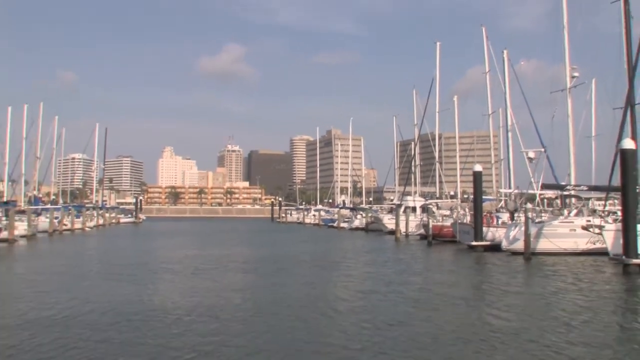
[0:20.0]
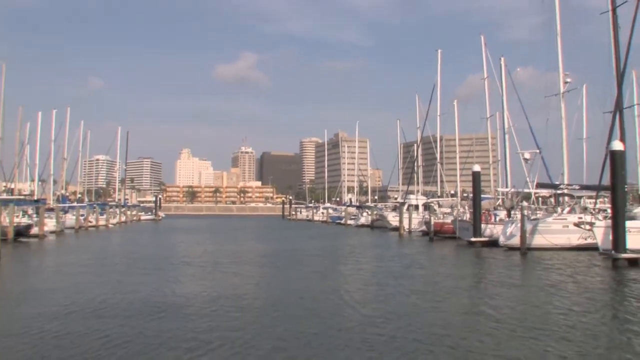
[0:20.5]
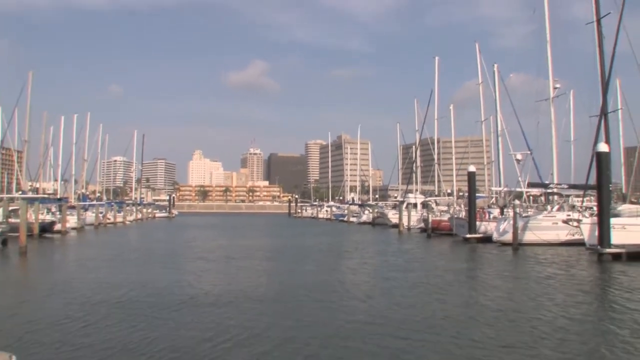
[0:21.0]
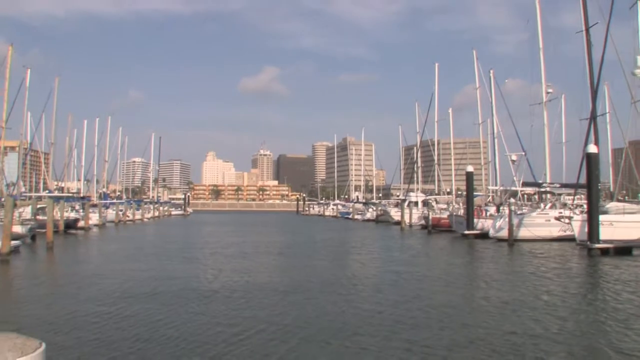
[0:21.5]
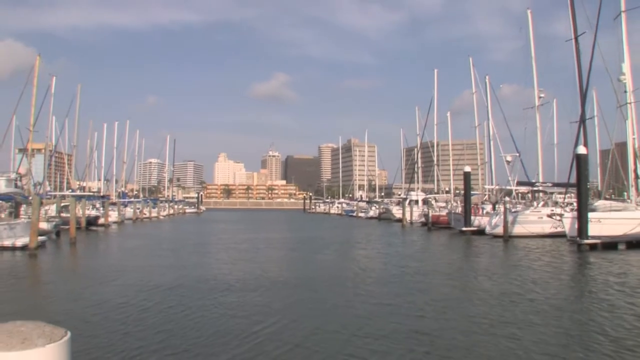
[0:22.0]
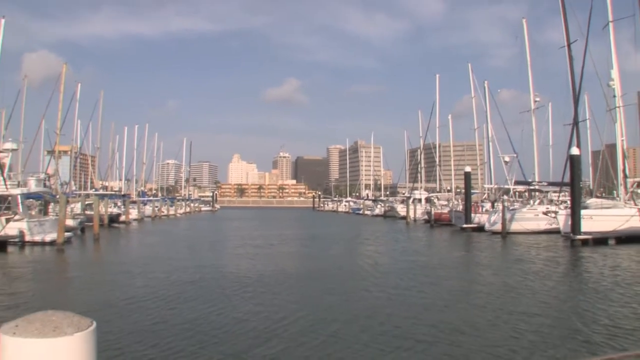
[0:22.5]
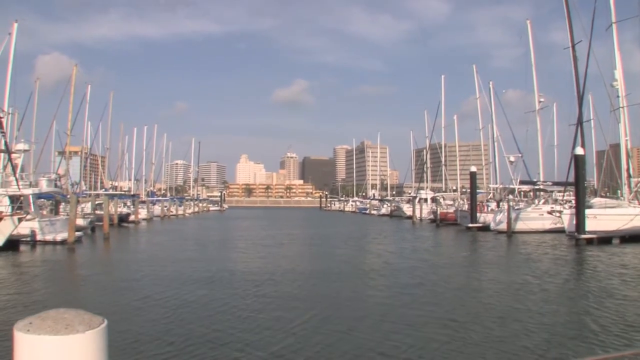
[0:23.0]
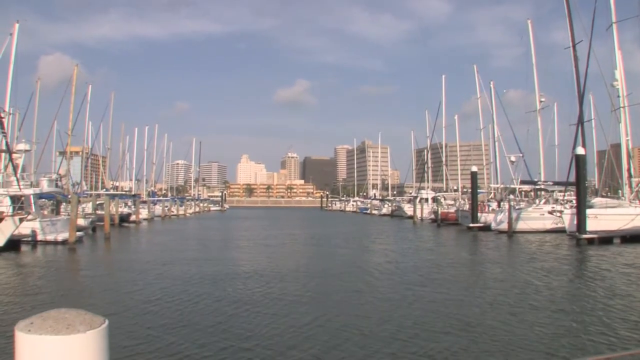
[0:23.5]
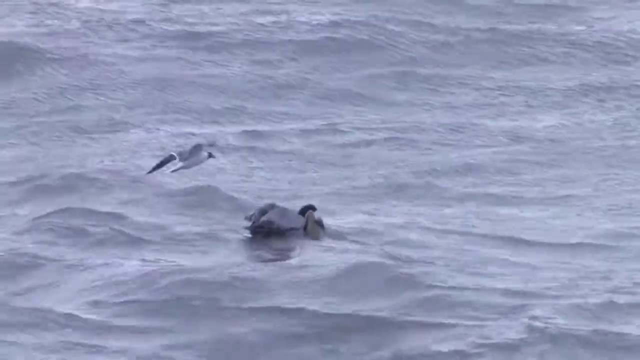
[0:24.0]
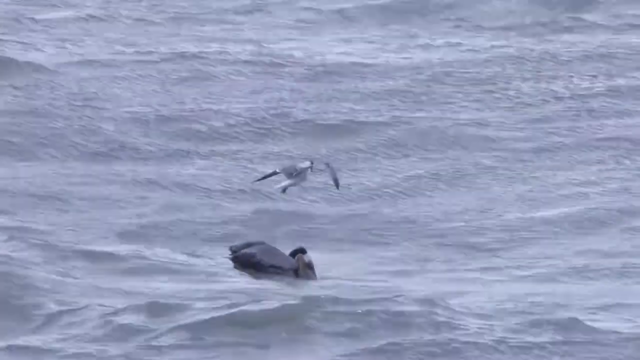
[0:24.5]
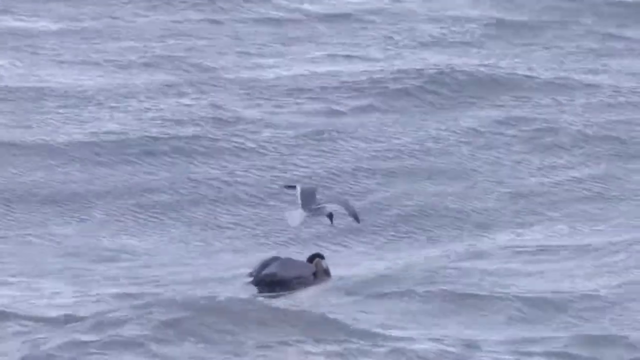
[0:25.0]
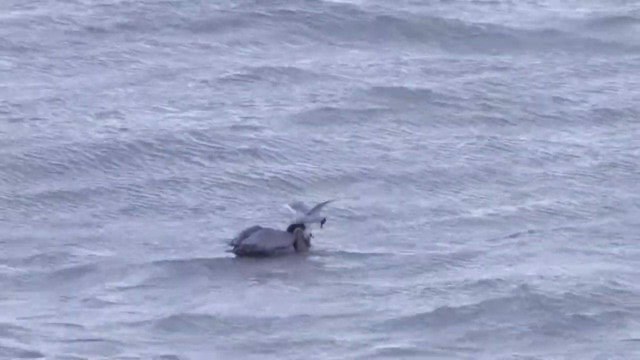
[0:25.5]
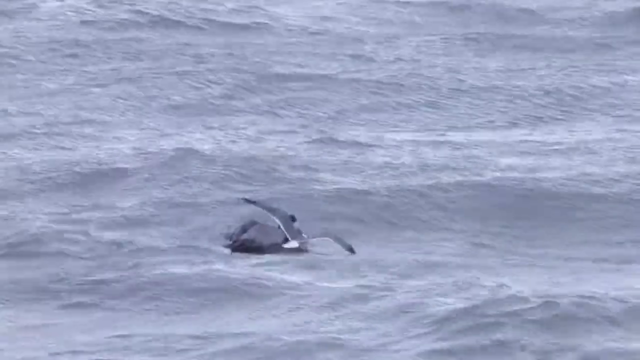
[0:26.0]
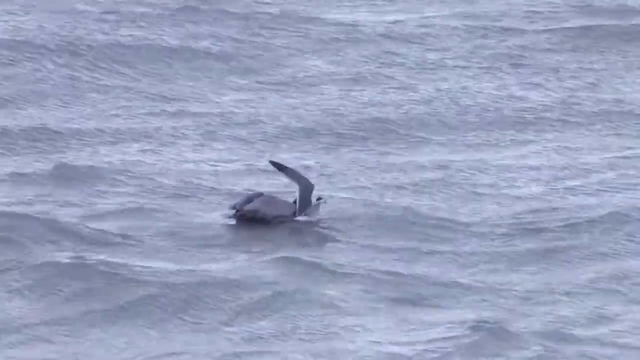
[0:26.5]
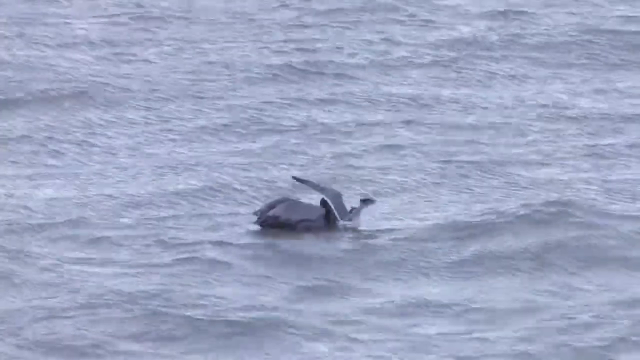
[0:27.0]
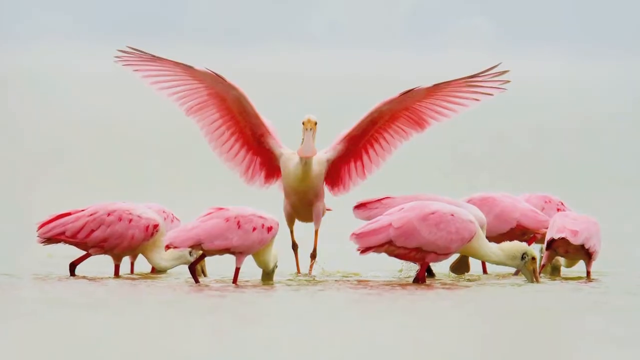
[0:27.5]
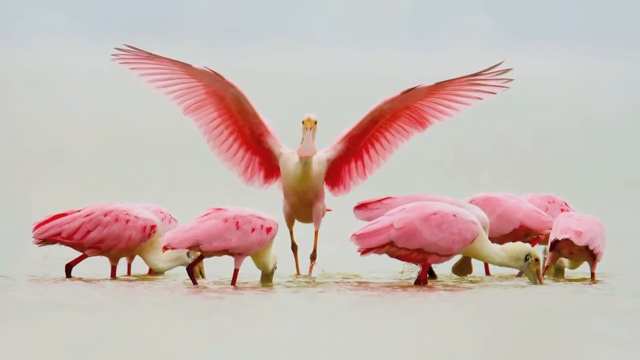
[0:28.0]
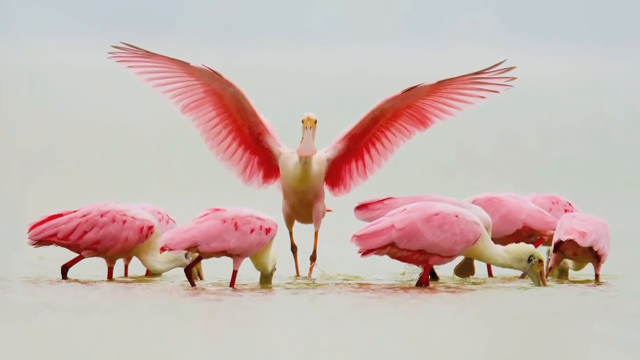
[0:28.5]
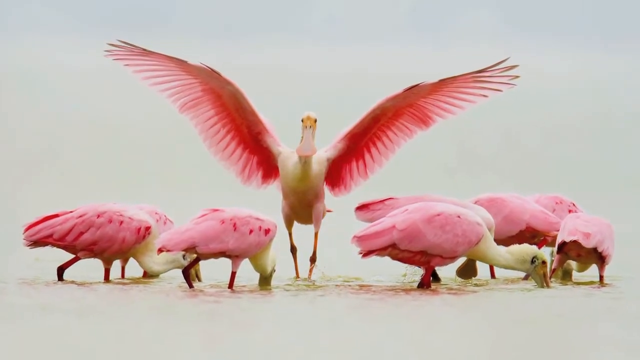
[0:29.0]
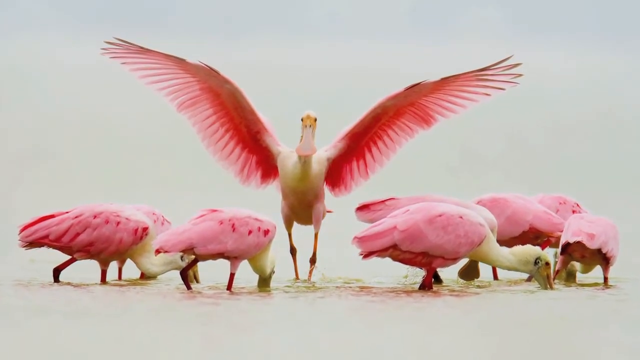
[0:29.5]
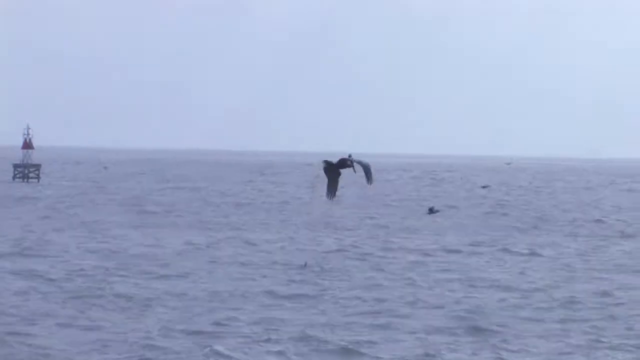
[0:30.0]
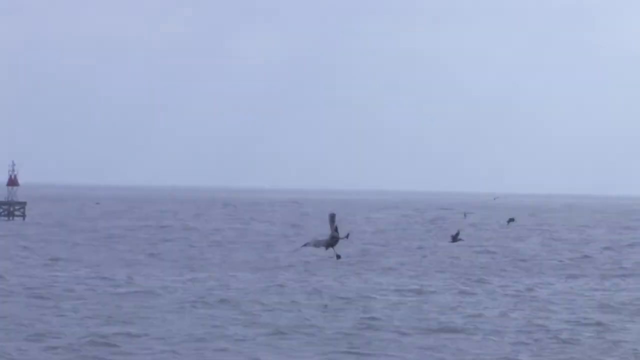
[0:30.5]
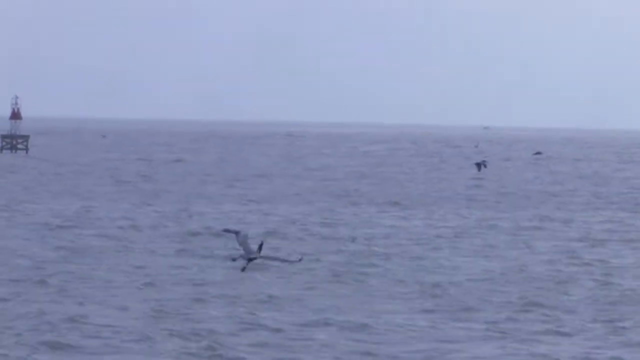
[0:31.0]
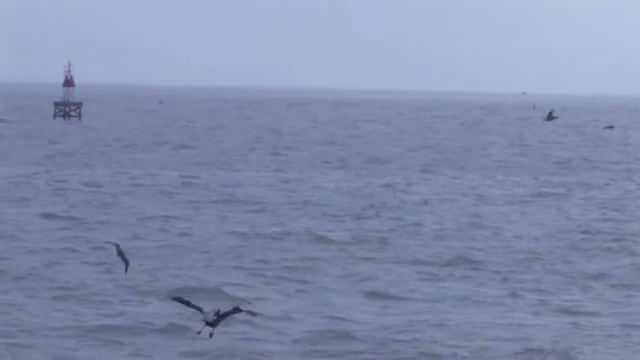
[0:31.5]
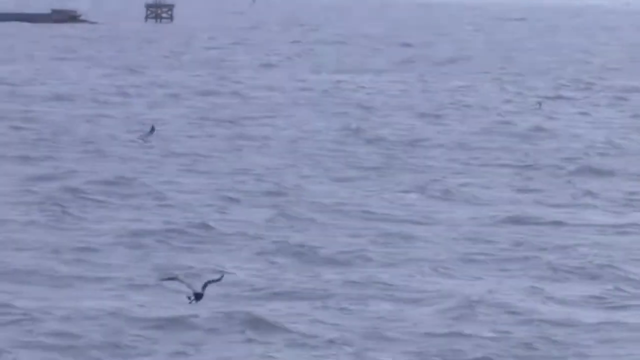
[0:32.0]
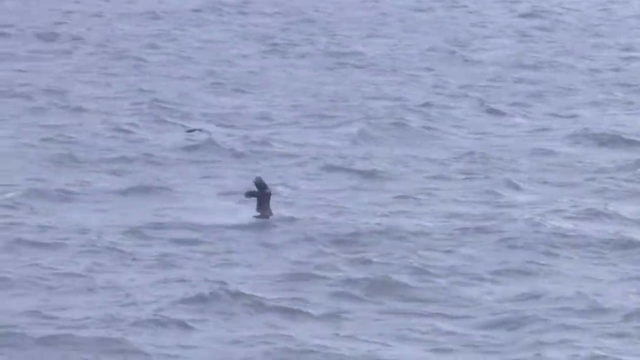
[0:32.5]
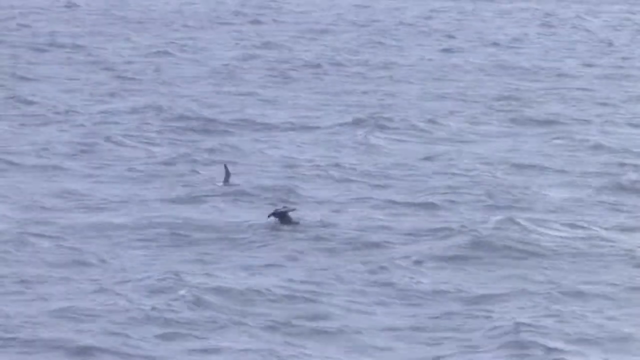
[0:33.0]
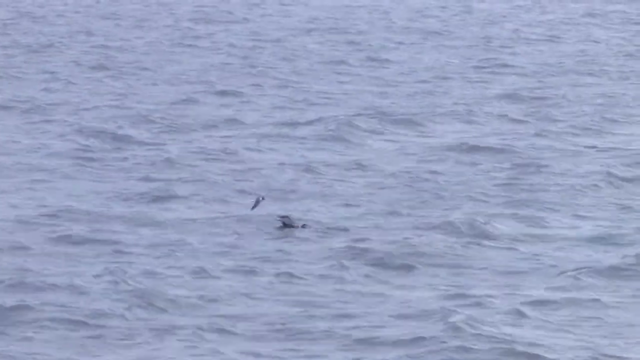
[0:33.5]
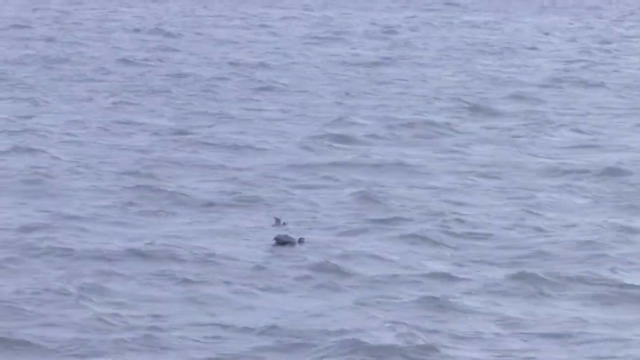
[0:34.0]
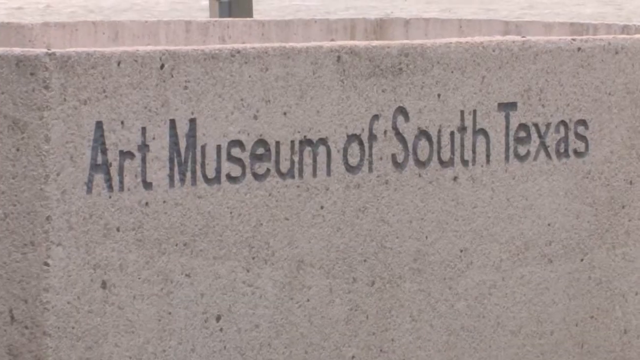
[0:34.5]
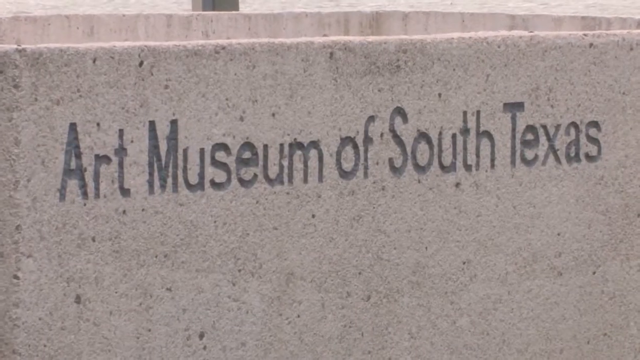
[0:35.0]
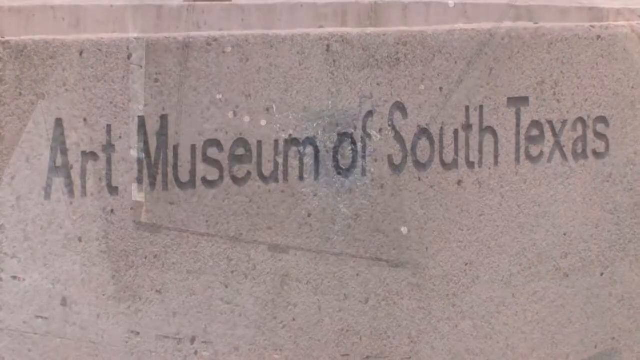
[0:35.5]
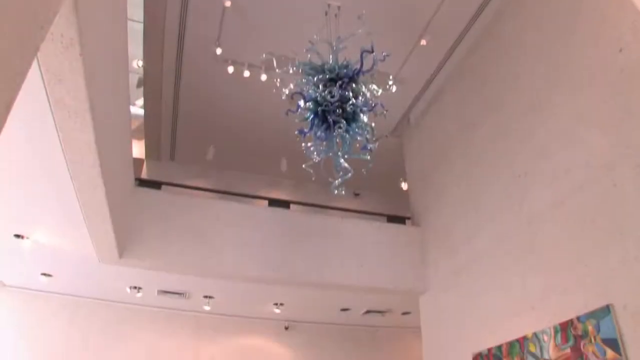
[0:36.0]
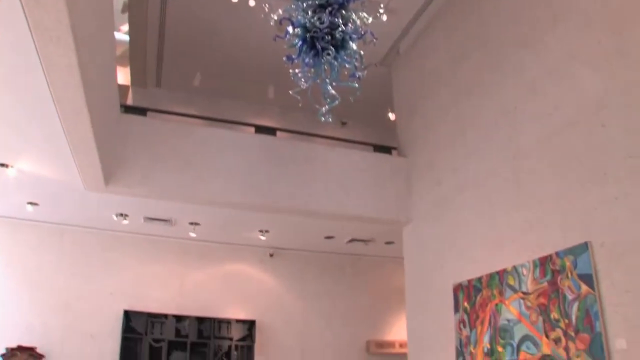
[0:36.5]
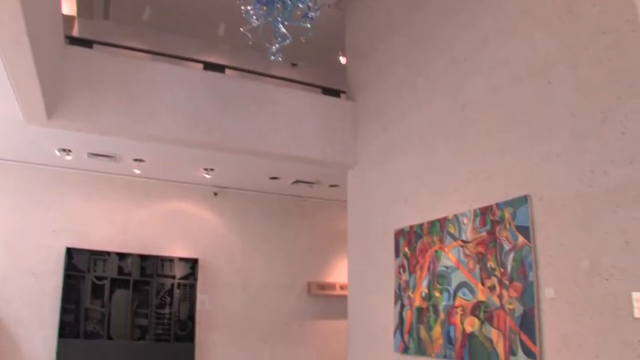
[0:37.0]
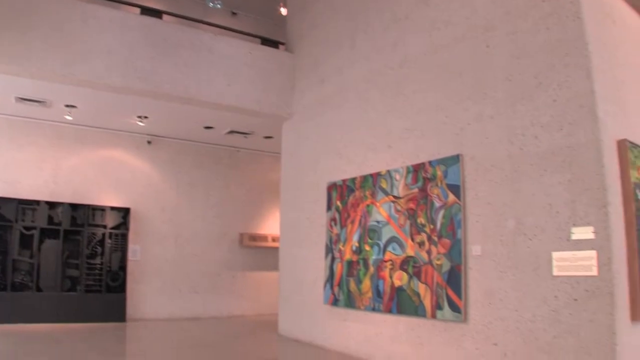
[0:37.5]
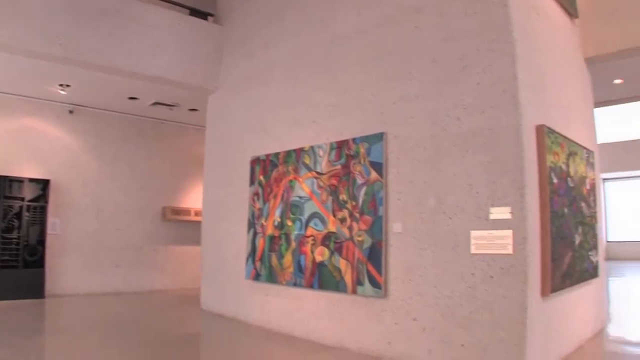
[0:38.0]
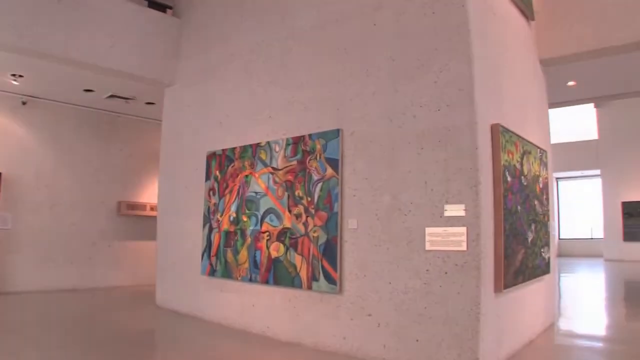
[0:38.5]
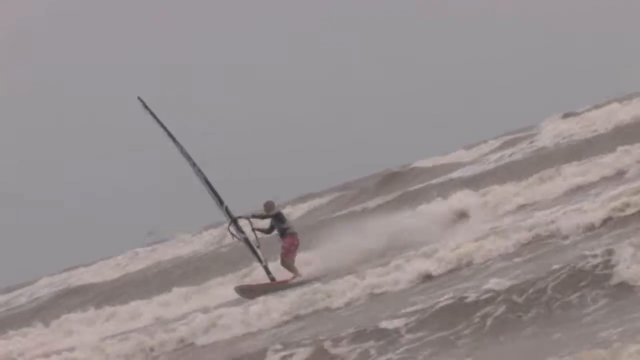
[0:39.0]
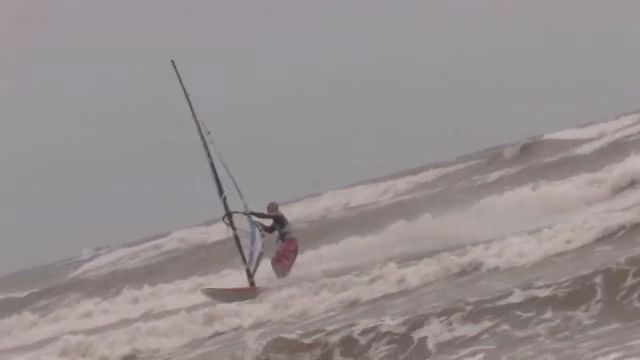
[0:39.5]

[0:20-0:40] A bay or dock is in the foreground, with a bunch of sailboats on the left side of the screen; their masts are up but there are no sails on them. A cityscape is in the background under a blue sky with some clouds. The camera pans out. The scene switches to some birds in the water: one is flying and one is in the water, and they face the right side of the screen. One looks like a pelican, and the smaller bird lands next to it. Next, birds with pink wings appear against a white background; some have their backs to the camera and some have their heads toward the right of the screen. They stand in water: one bird faces the camera with its wings outstretched and its legs in the water, while the other birds have their heads and beaks in the water. Then a seagull flies, hovers, and lands in the water, and another seagull lands beside it. Next is a cement structure with "Art Museum of South Texas" carved into it, followed by the inside of a building with paintings hanging on the wall. Finally, a person is shown on a sailboard, sailing.